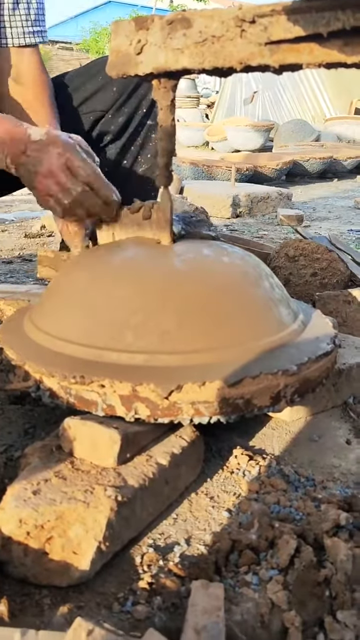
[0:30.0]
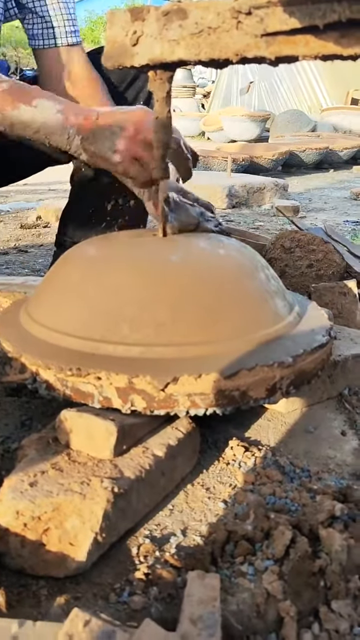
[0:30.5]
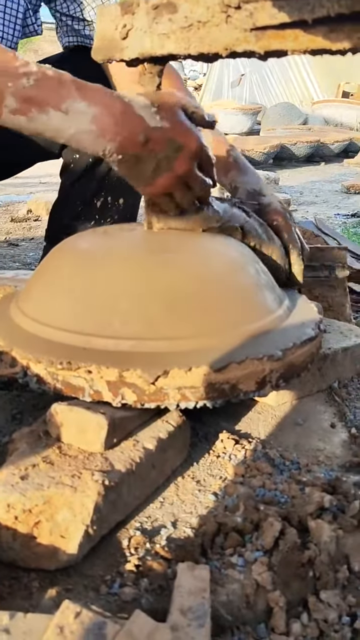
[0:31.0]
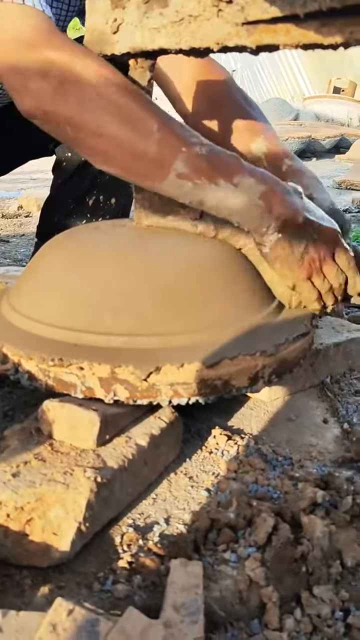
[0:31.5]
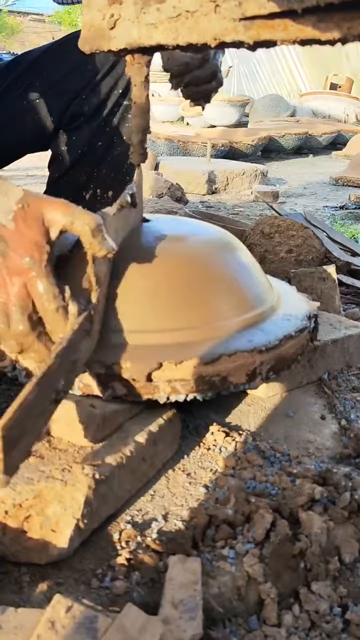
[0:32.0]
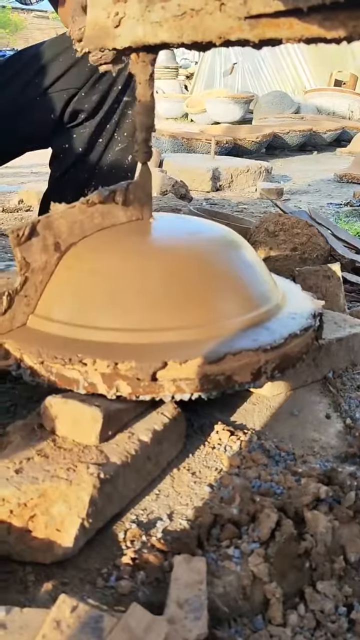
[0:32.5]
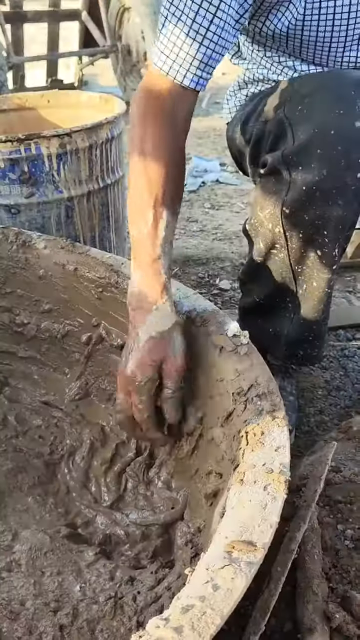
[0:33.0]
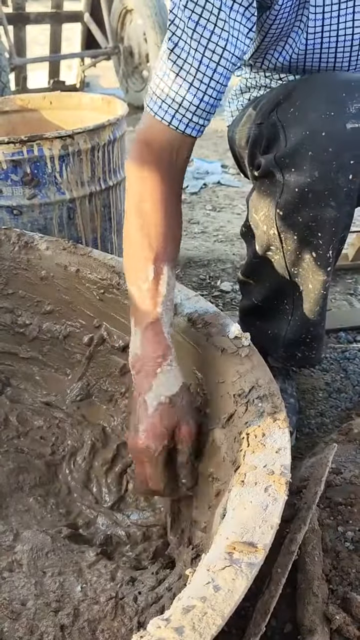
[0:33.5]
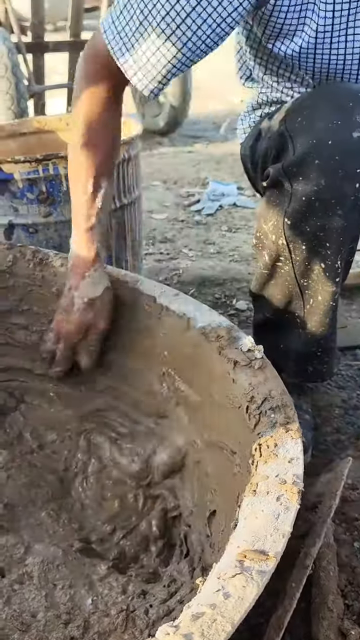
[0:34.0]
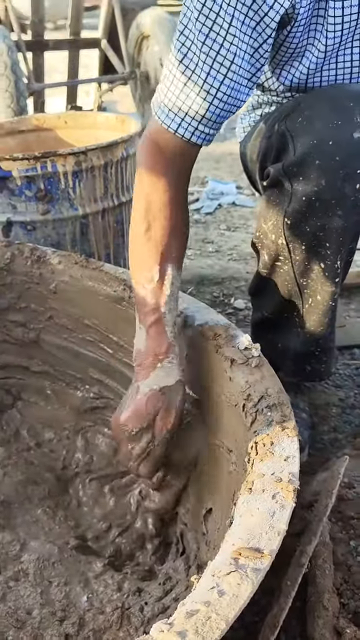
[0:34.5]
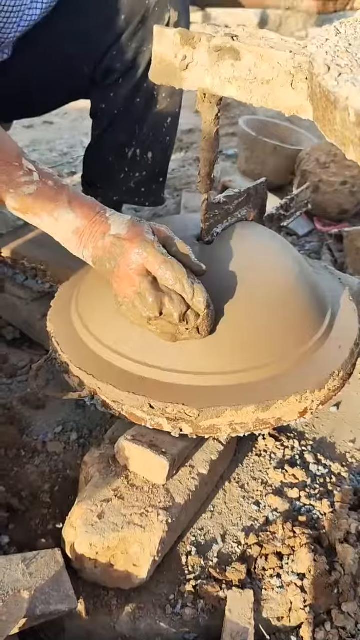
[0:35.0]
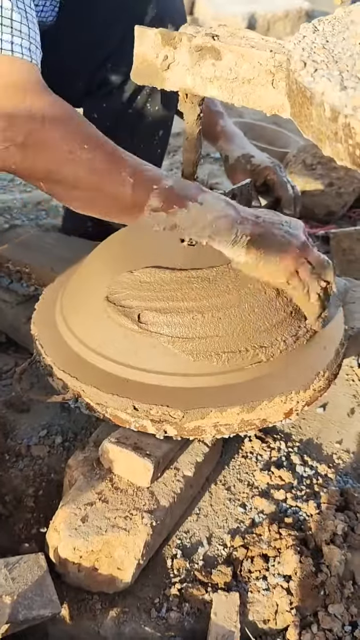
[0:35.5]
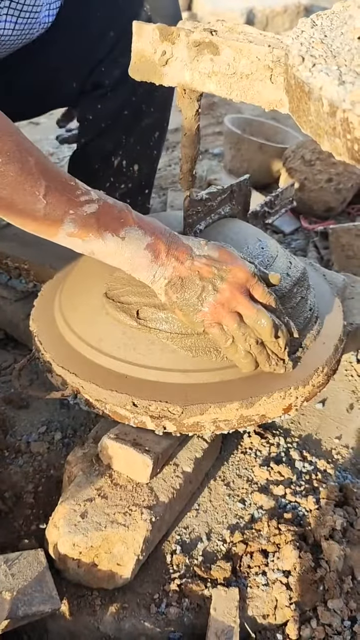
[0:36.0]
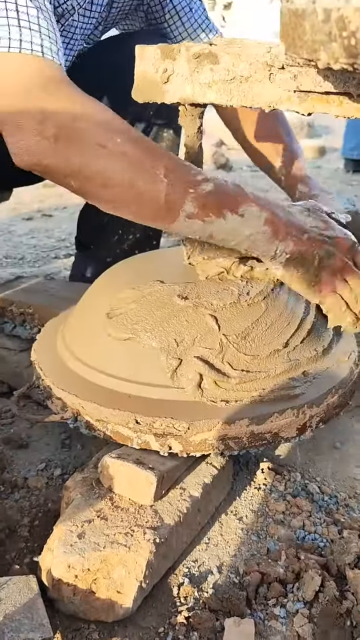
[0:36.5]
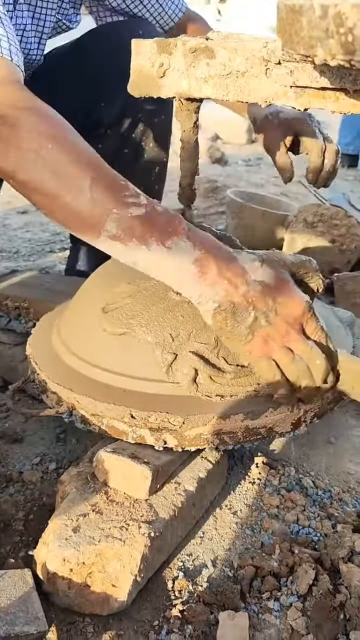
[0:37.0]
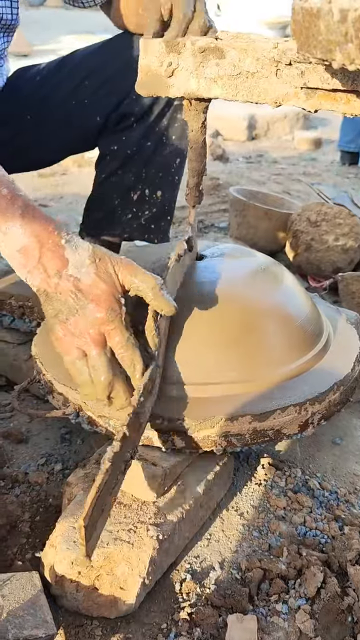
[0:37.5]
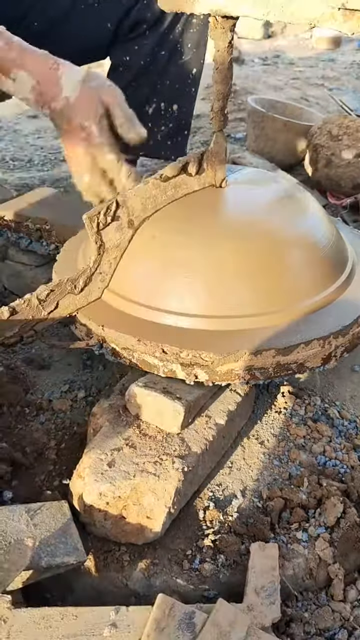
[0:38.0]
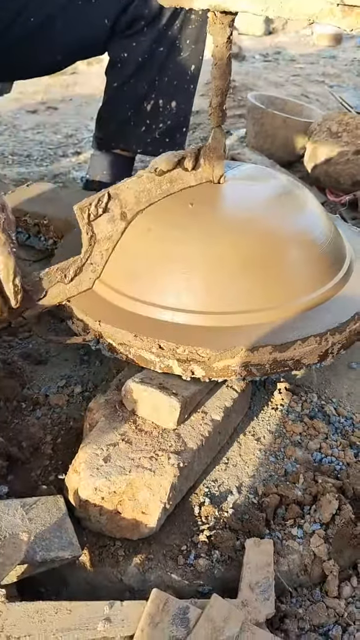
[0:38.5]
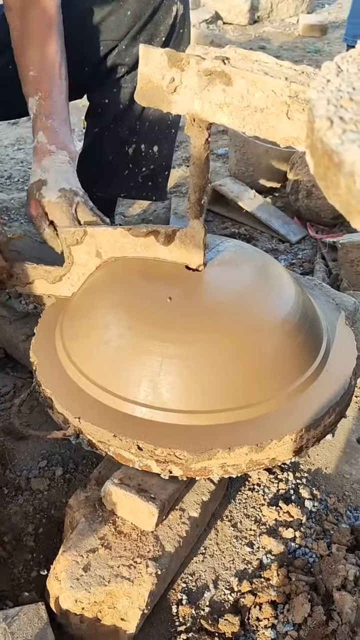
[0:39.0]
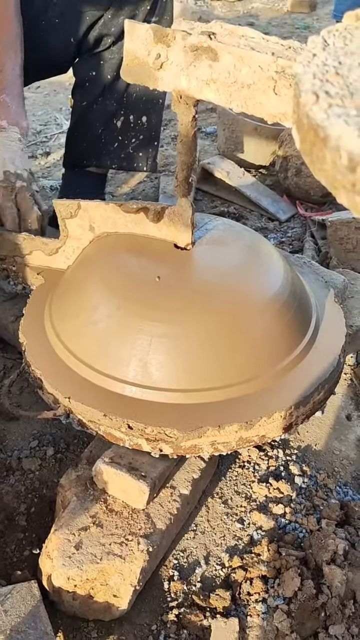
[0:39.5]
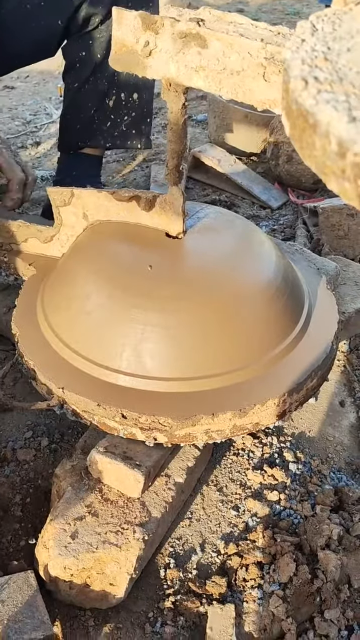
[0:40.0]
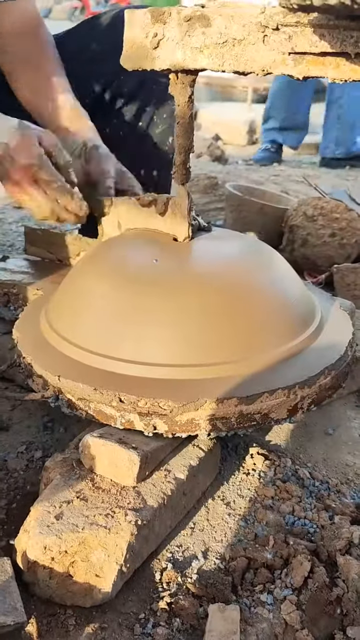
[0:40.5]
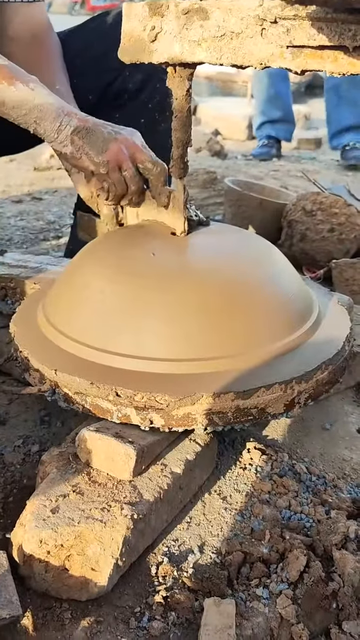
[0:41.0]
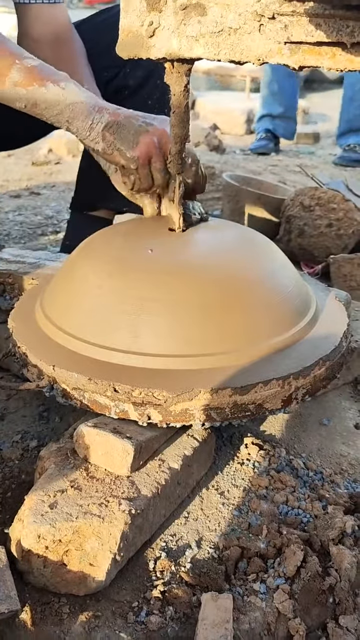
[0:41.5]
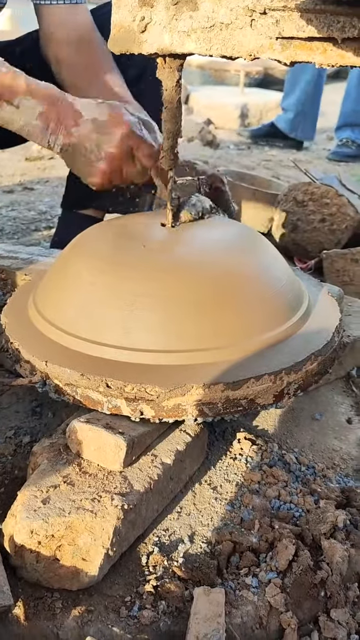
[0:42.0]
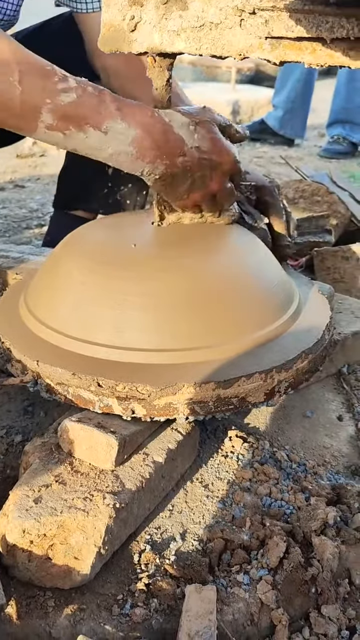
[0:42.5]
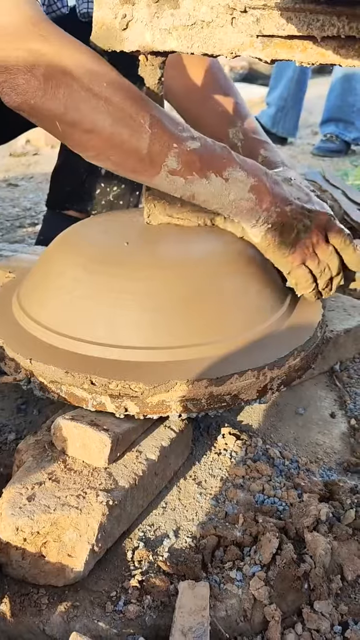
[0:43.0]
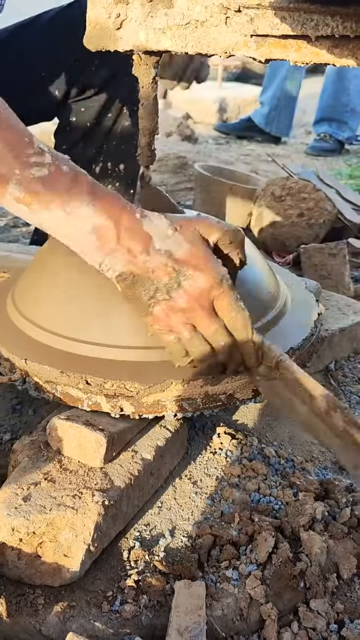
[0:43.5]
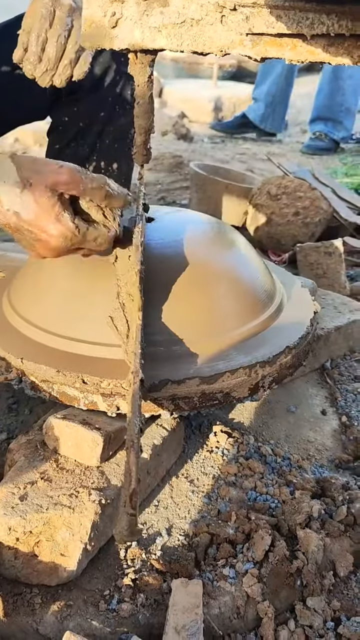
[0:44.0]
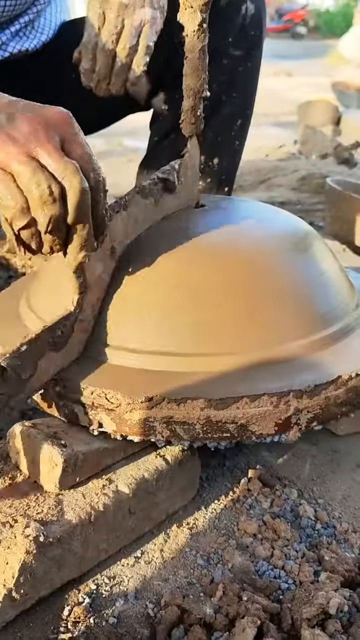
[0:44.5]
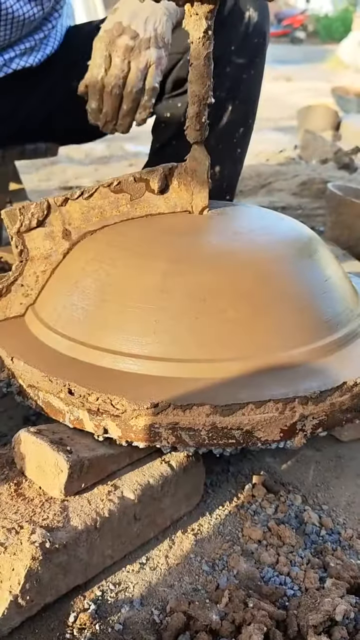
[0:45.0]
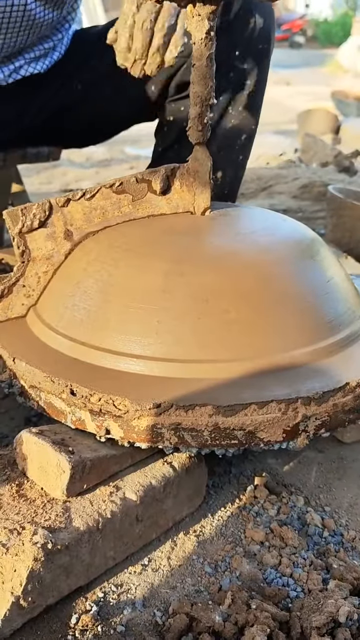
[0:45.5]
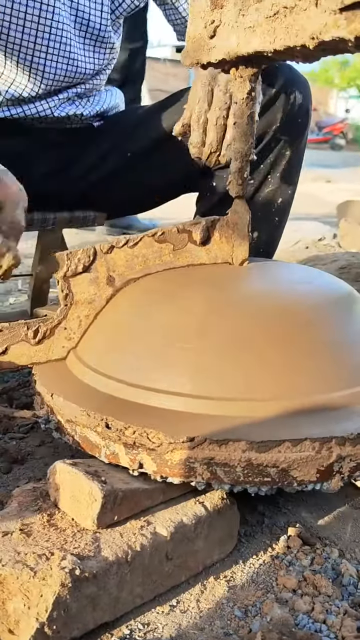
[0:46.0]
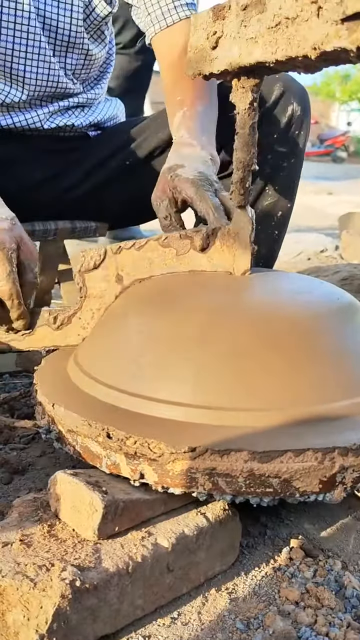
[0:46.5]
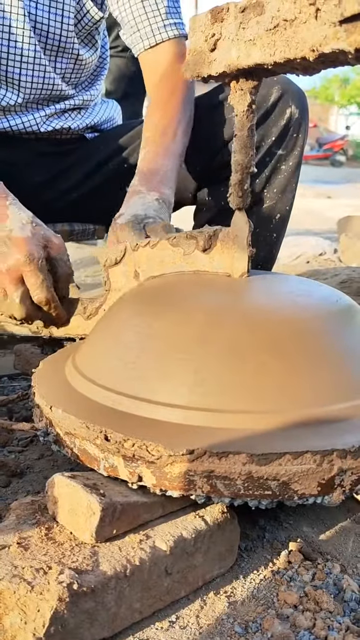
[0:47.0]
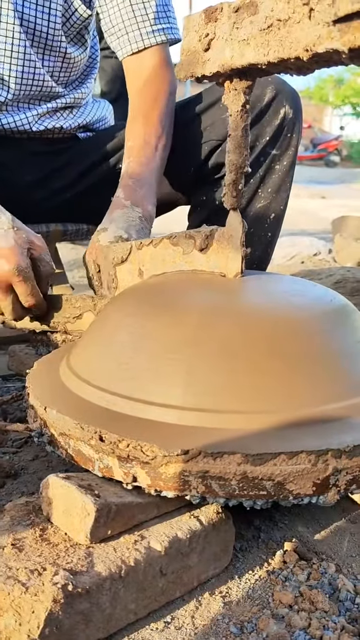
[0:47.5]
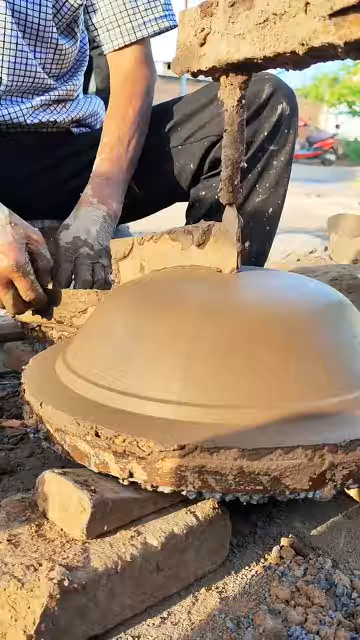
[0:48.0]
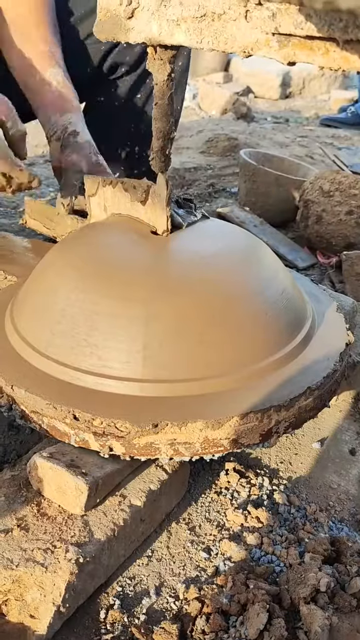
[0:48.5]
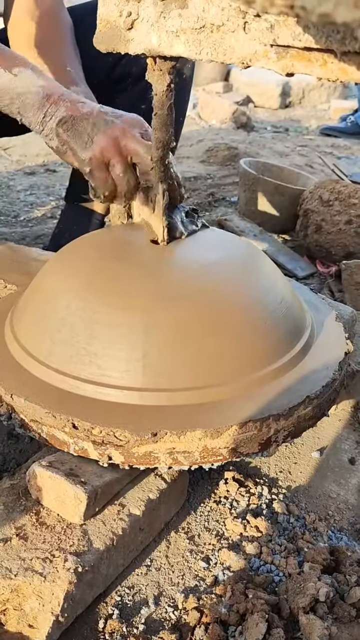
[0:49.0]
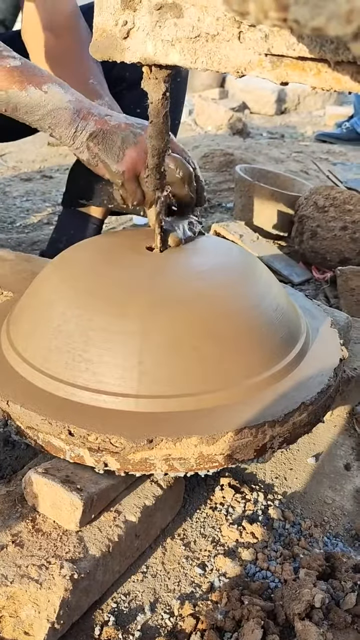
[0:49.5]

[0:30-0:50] The surface is now much smoother and a darker color, as the tool is used to give the structure its shape. In the background are a wheelbarrow and what looks like a dolly with large wheels. The man puts more clay on top of the structure with his fingers and again uses the spinning protractor device, which wipes off the excess clay so the surface appears very smooth with no indentations. There are a lot of pebbles and clay on the ground. In the top right, someone's legs are visible from the shin down, wearing flared pants that look like blue jeans and black shoes. A close-up then shows the man working; he looks like he is seated on a wooden stool close to the apparatus.